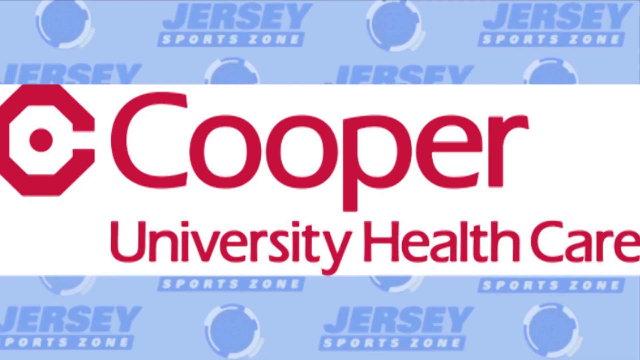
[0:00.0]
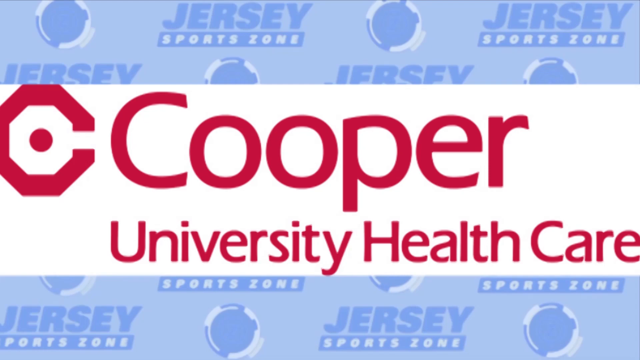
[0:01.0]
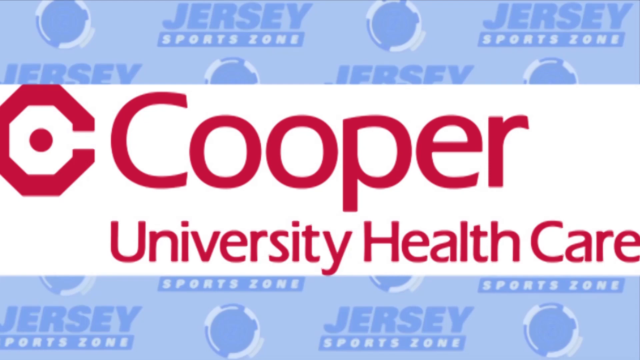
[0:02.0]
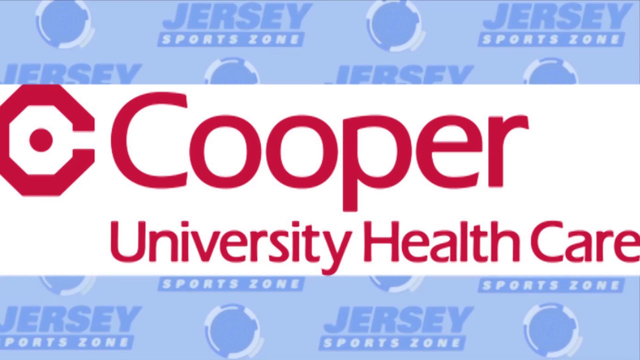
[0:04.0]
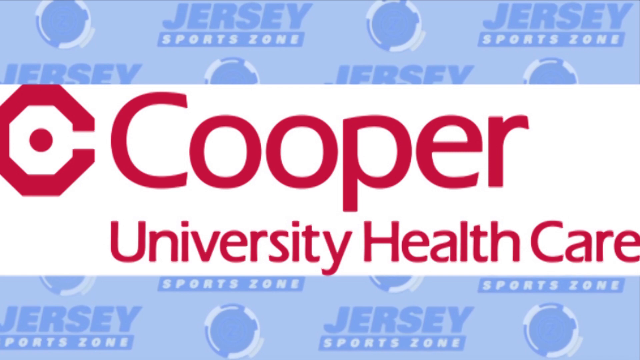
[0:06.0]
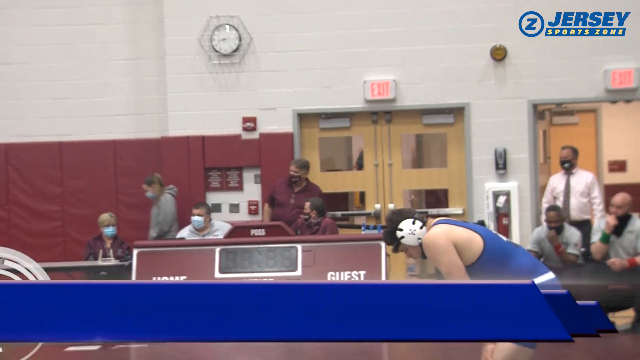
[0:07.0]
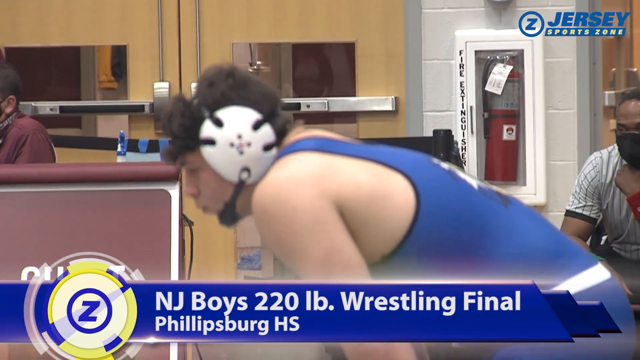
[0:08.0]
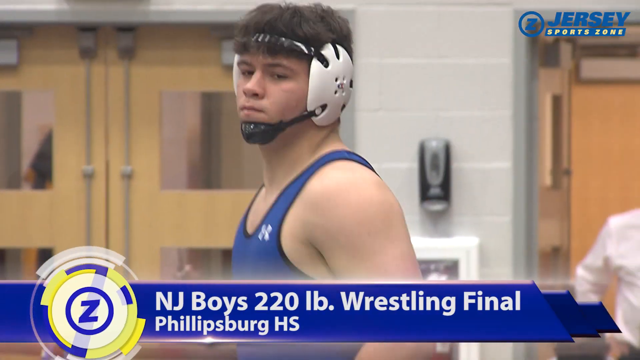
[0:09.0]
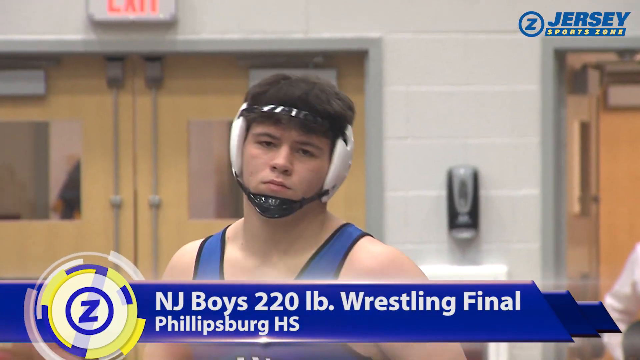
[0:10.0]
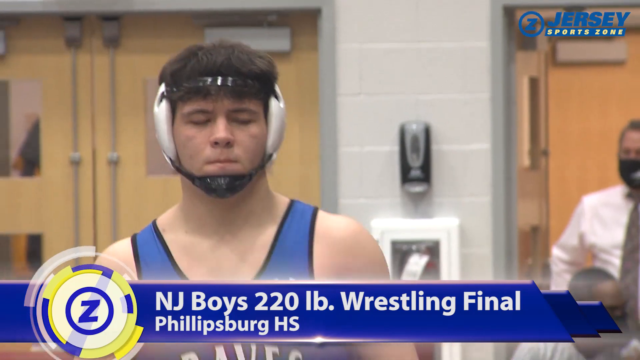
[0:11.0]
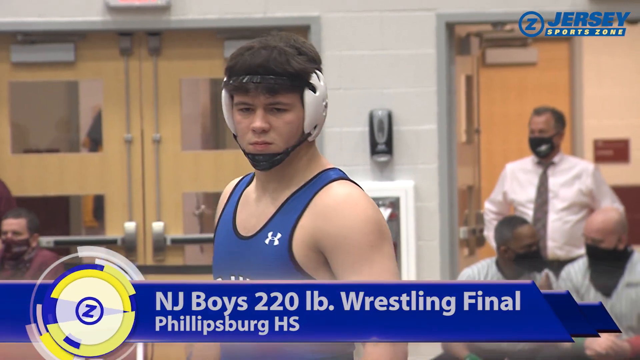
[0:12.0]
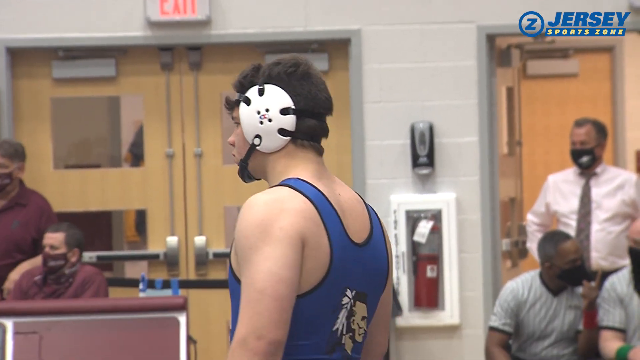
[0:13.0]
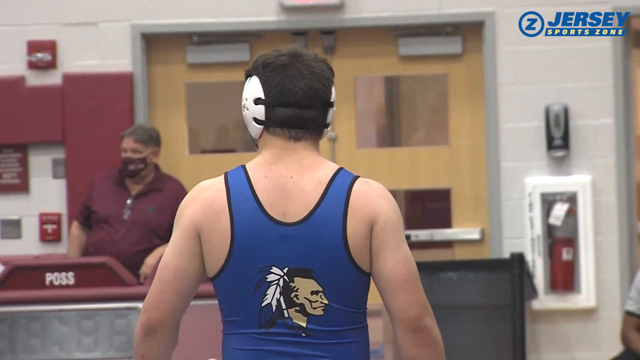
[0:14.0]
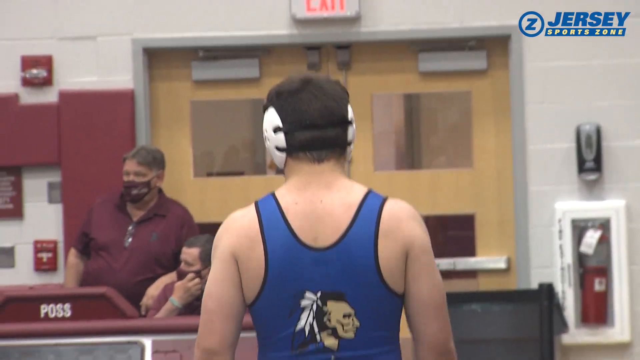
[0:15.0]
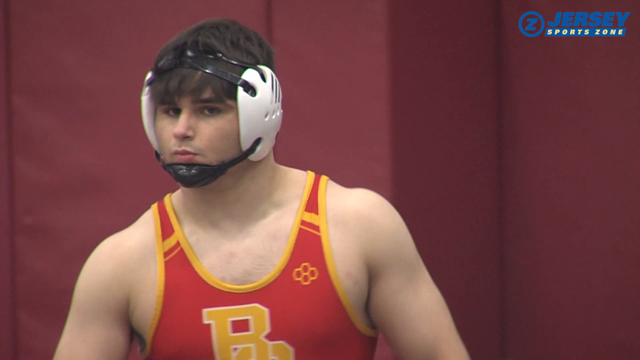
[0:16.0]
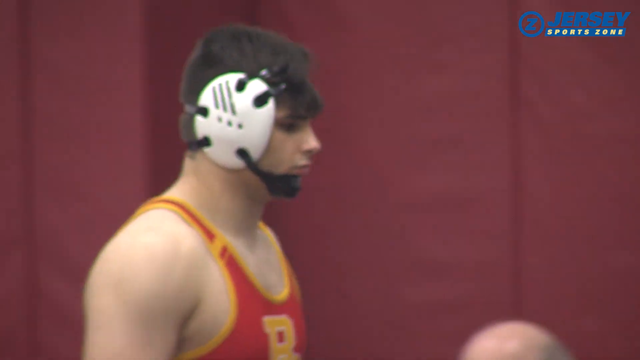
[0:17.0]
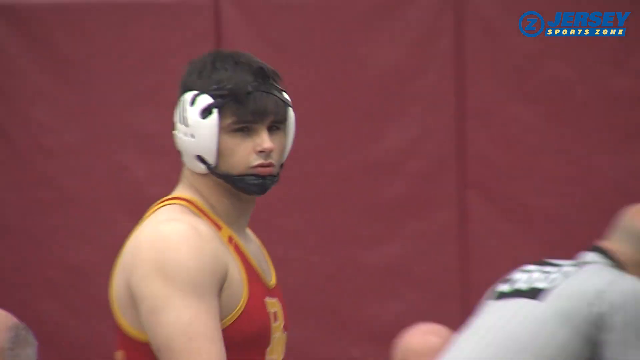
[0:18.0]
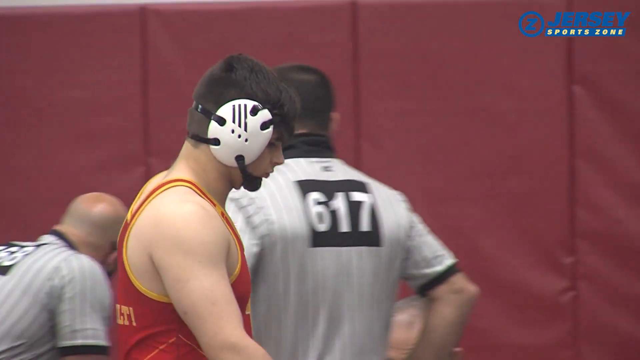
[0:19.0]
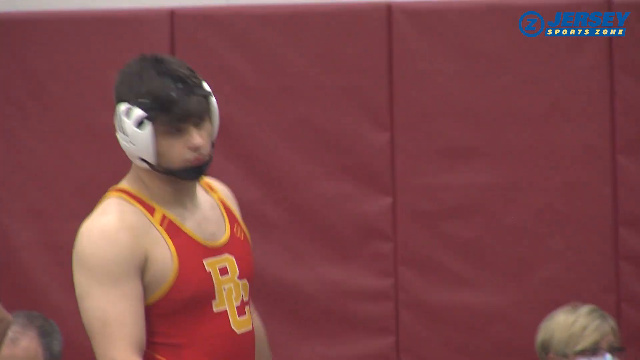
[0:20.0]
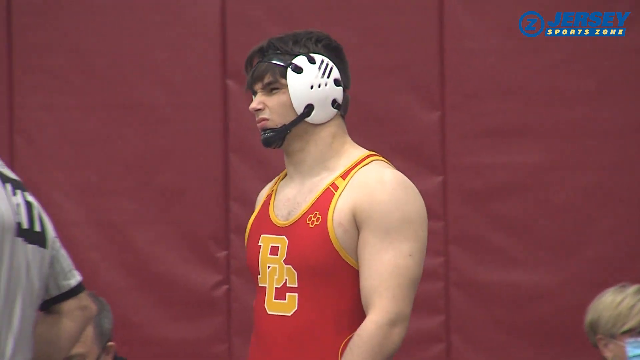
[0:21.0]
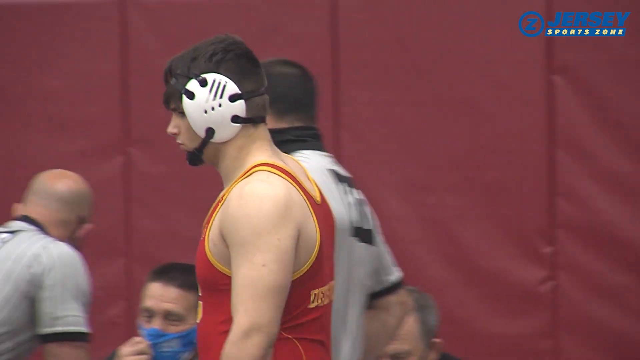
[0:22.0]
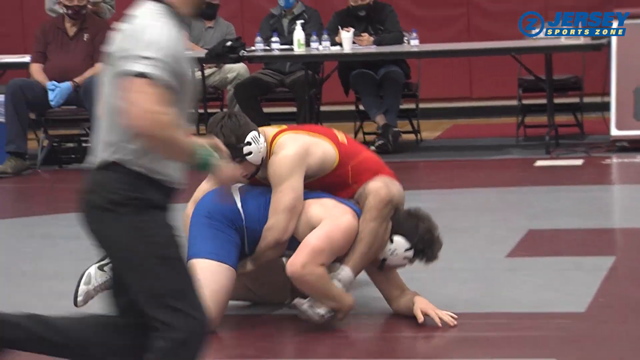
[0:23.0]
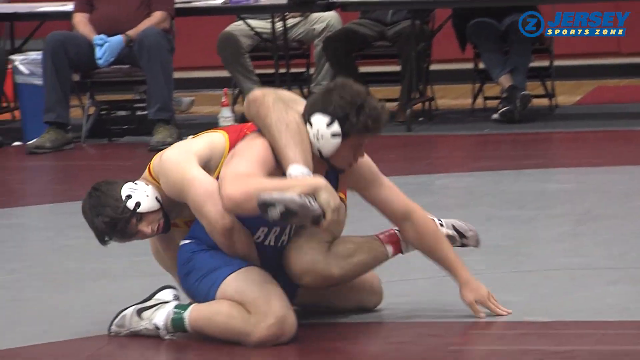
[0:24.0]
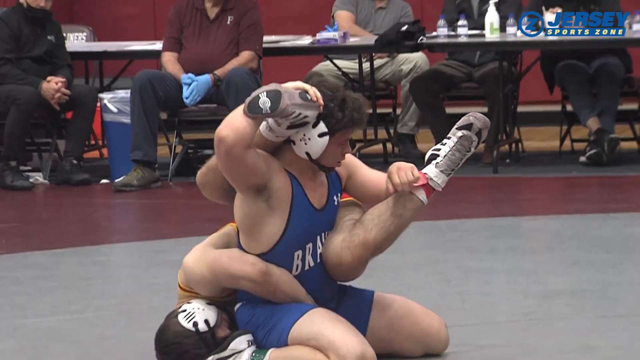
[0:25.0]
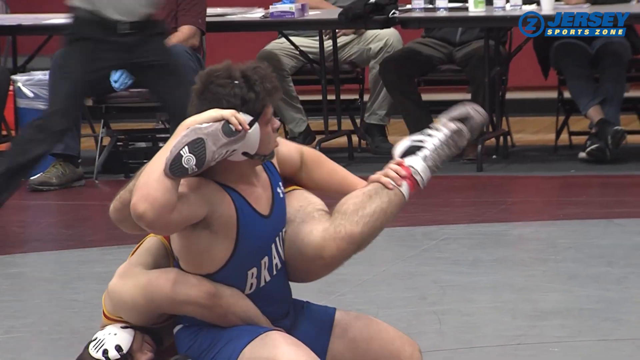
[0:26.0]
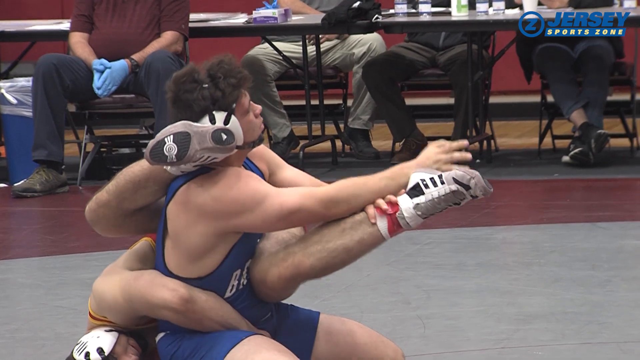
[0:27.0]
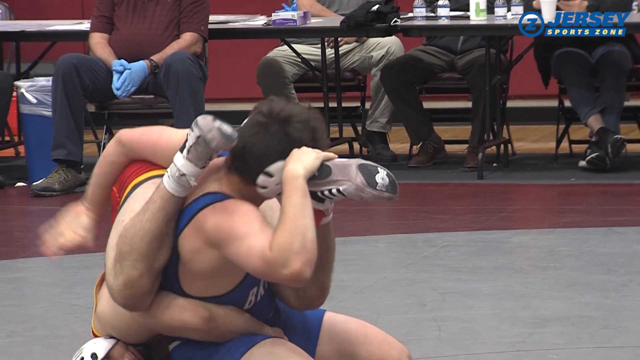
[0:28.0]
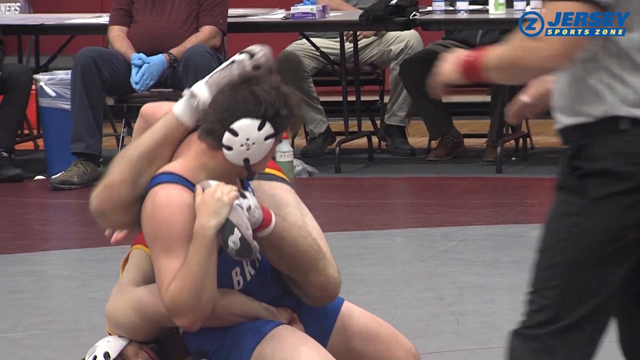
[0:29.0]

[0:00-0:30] The video opens on a still screen with a white striped banner across the center bearing red writing: "Cooper" in big letters and, below it in smaller letters, "University Health Care", with a logo to the left of the C in Cooper. The banner is set on a light blue background with a tiled print that reads "Jersey" in big italic letters with a bar below it that says "sports zone" in white; between each repetition of the Jersey Sports Zone text is a blue circle with a white border, repeated across multiple rows of the background. The video then switches to footage of a New Jersey boys 220-pound wrestling final at Phillipsburg High School, as indicated by the bottom banner. It focuses on one wrestler wearing wrestling headgear with white pieces over his ears, a black chin strap and a black headband. He is Caucasian, short, with dark brown hair, and wears a blue tank top with an Indian on the back. They are in a high school gym. He is kind of jogging in place, jumping up and down, and then starts walking and pacing back and forth. The video then switches to another wrestler in a red jersey with a yellow P on it, wearing the same kind of wrestling headgear, who is walking and kind of pacing back and forth as well.